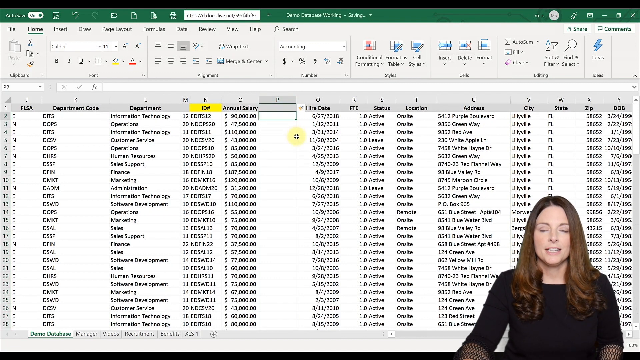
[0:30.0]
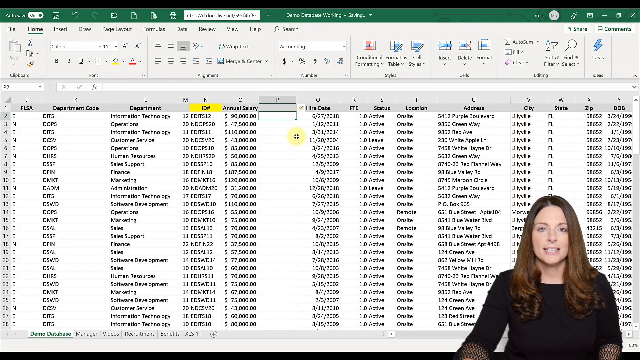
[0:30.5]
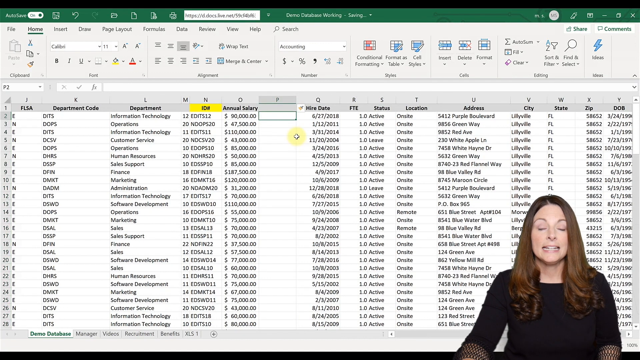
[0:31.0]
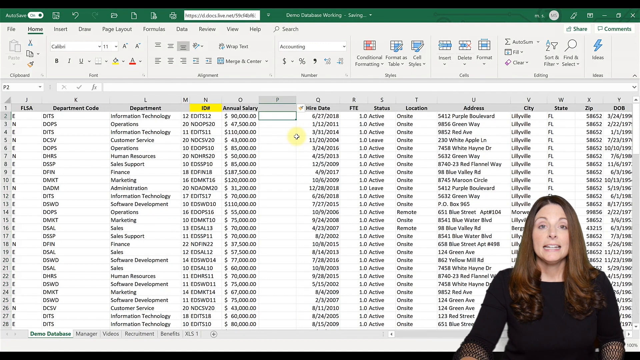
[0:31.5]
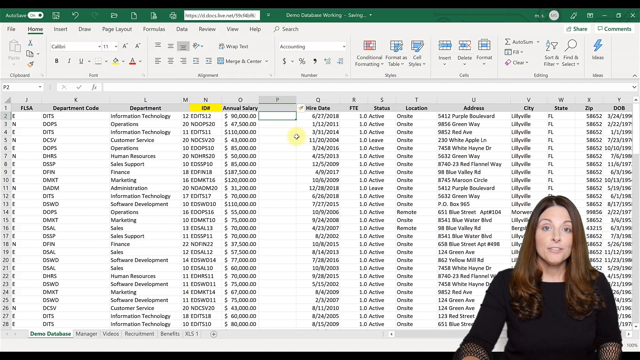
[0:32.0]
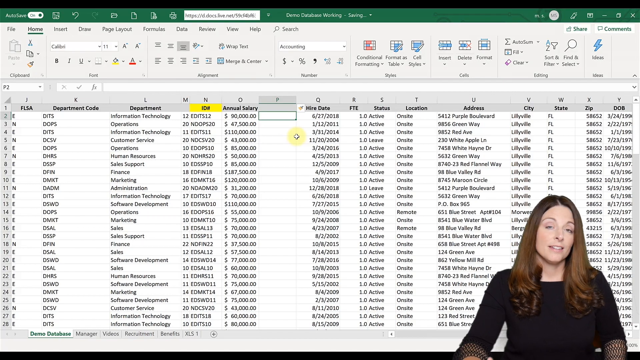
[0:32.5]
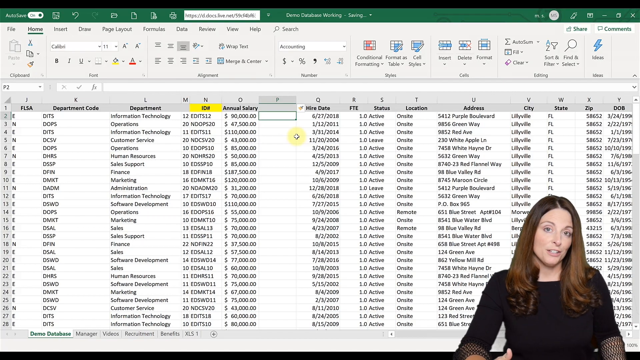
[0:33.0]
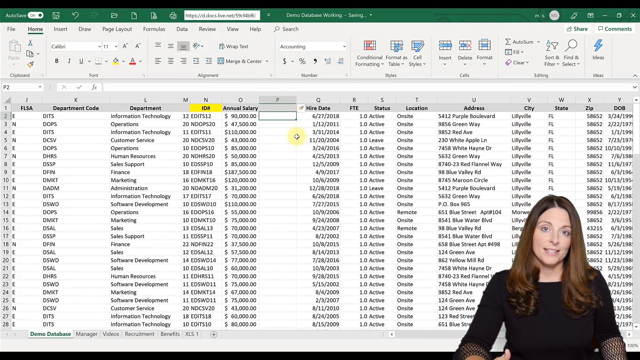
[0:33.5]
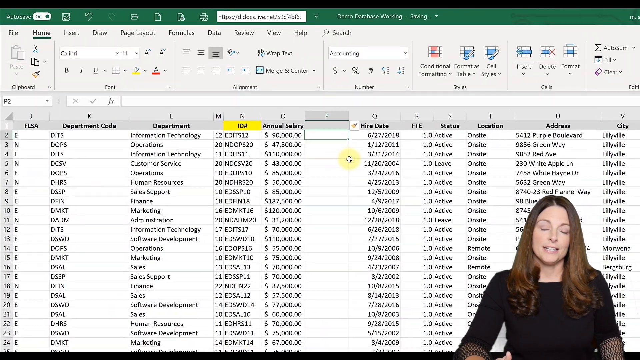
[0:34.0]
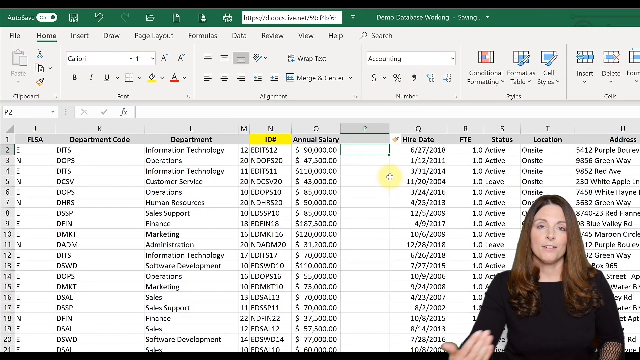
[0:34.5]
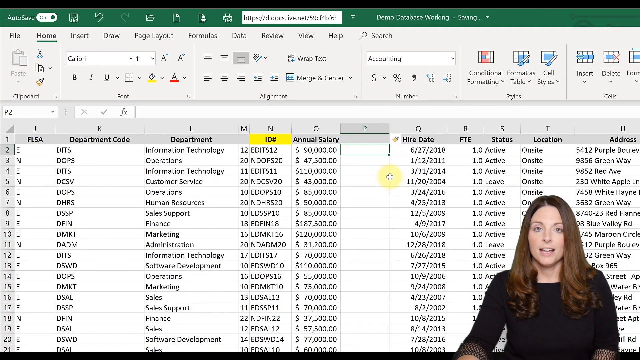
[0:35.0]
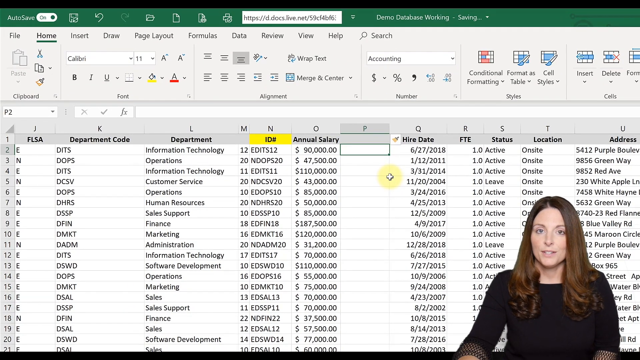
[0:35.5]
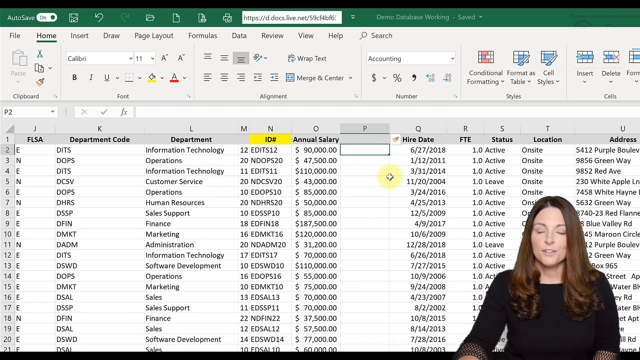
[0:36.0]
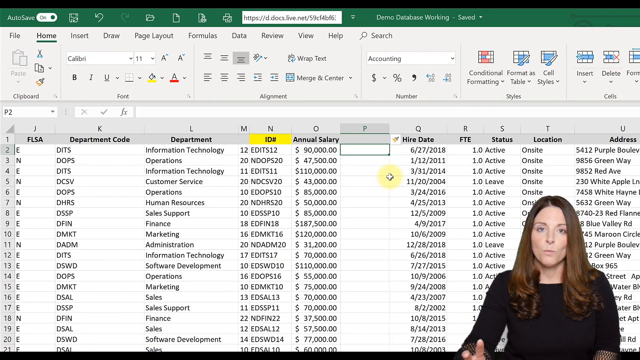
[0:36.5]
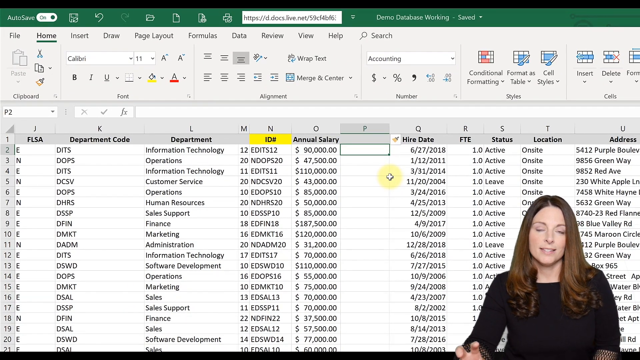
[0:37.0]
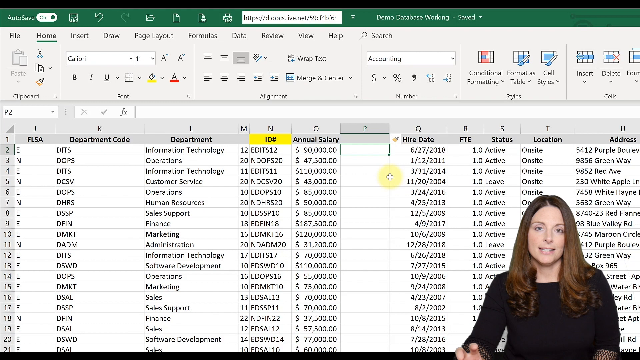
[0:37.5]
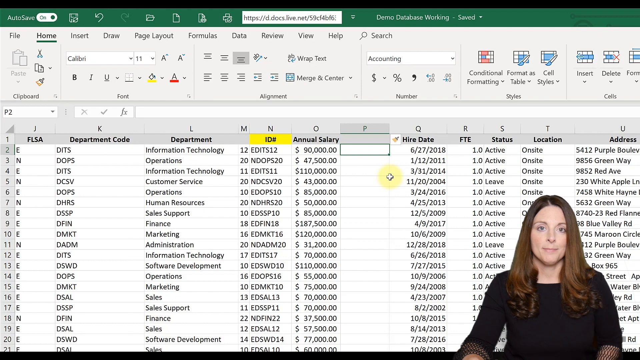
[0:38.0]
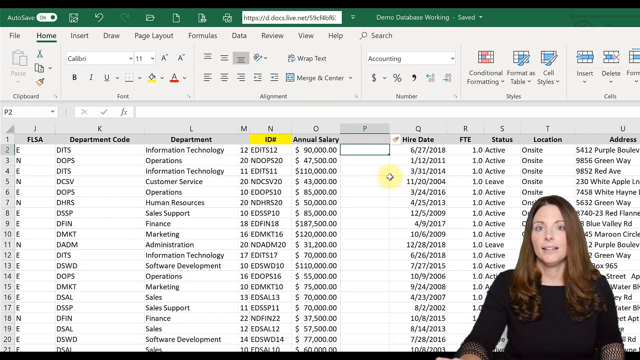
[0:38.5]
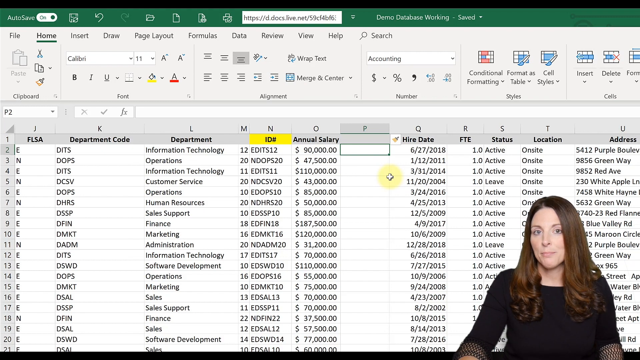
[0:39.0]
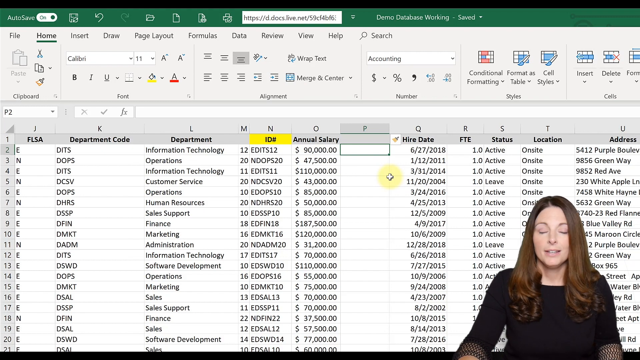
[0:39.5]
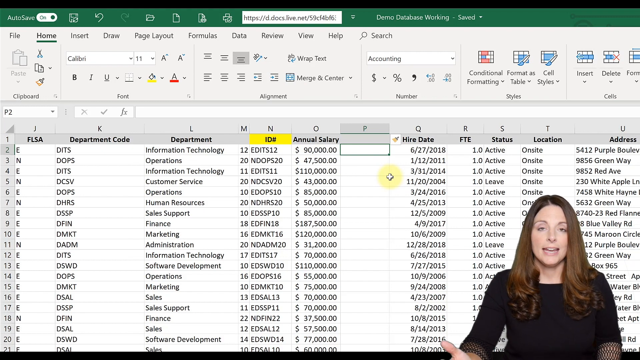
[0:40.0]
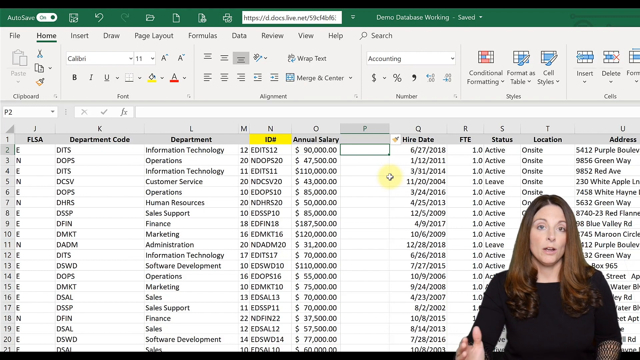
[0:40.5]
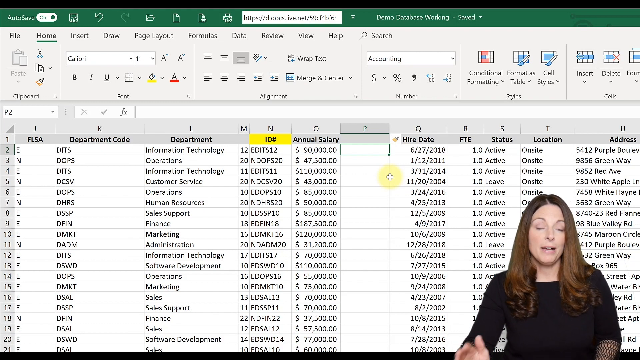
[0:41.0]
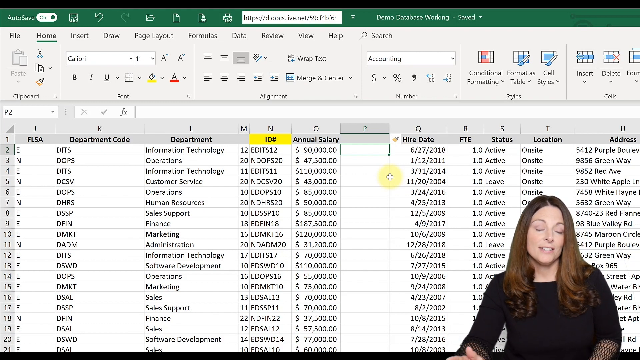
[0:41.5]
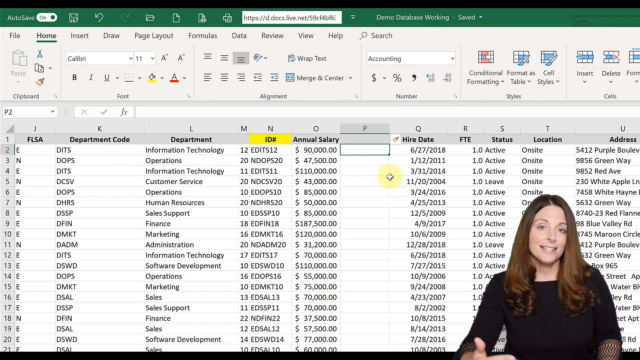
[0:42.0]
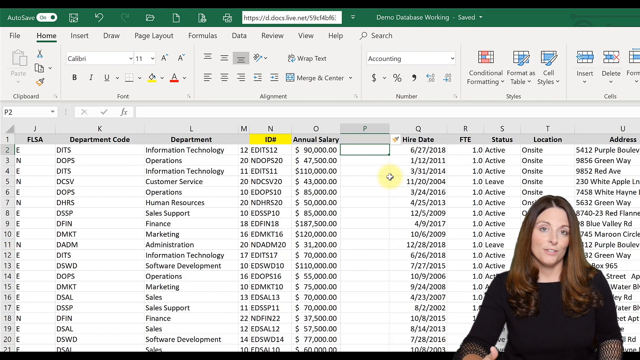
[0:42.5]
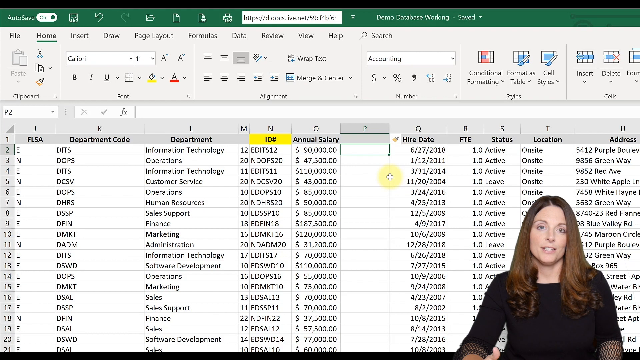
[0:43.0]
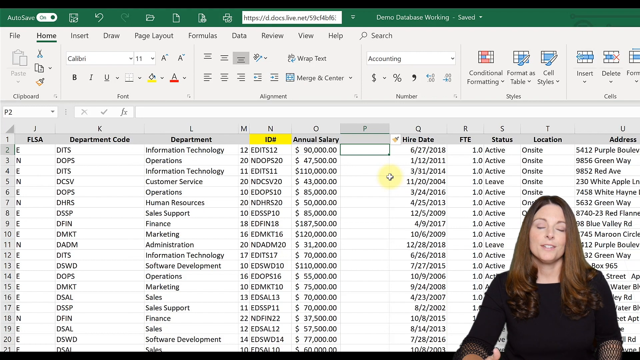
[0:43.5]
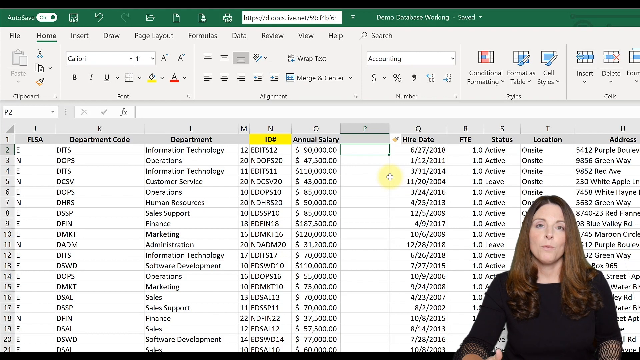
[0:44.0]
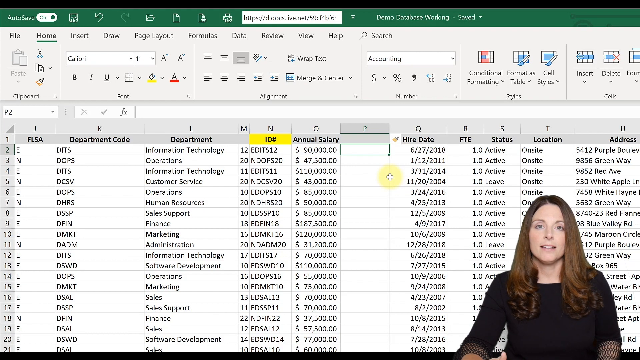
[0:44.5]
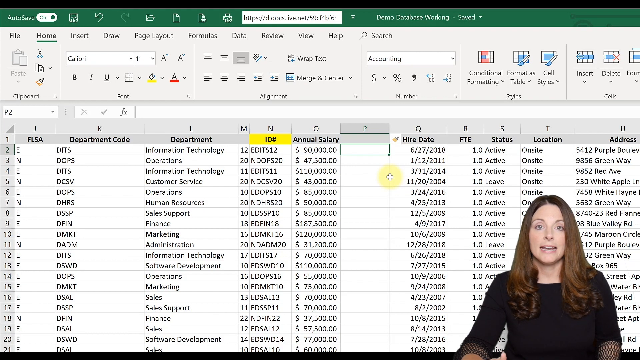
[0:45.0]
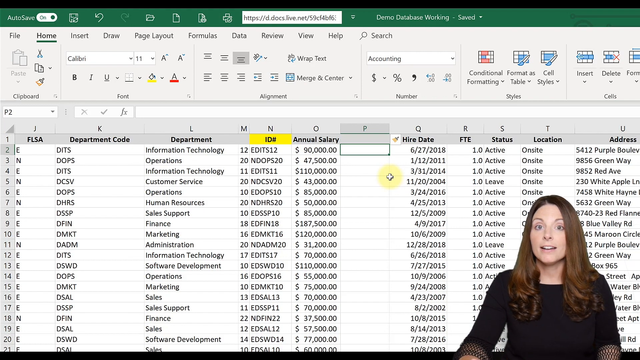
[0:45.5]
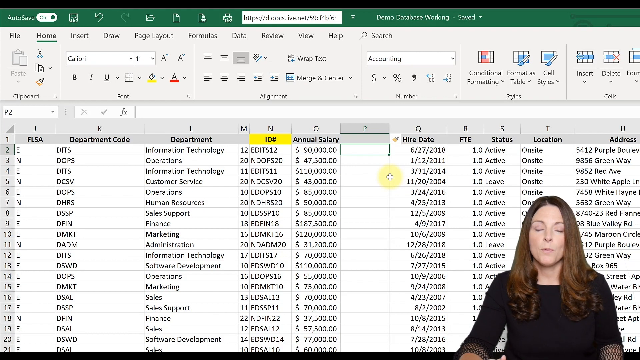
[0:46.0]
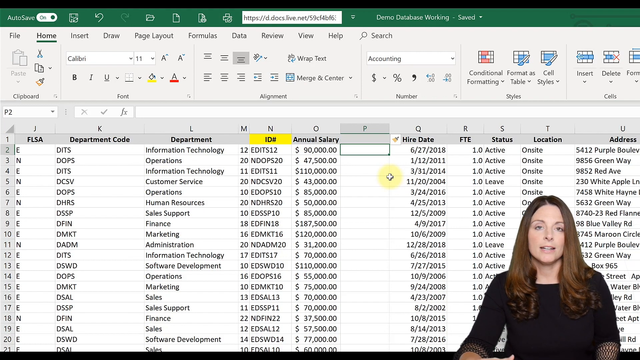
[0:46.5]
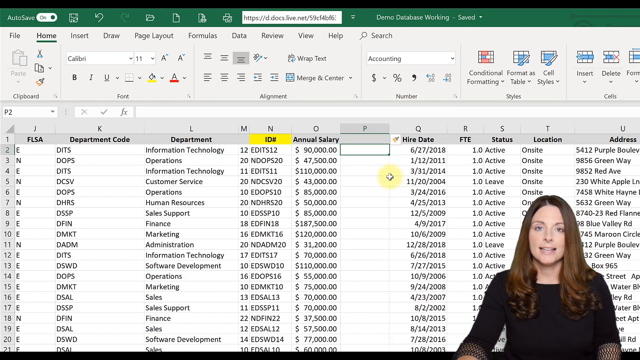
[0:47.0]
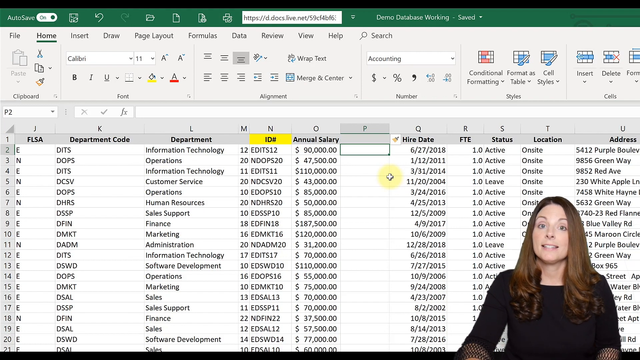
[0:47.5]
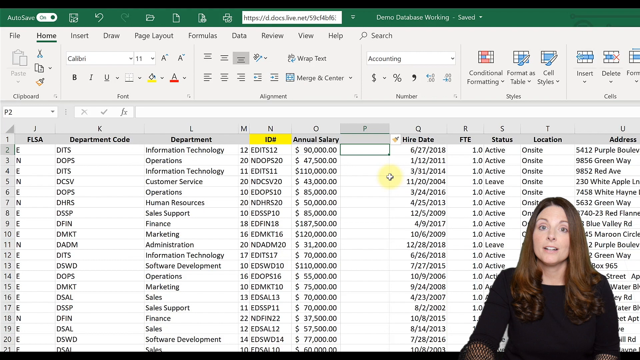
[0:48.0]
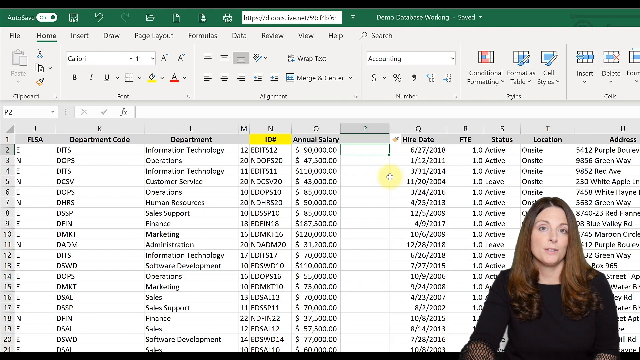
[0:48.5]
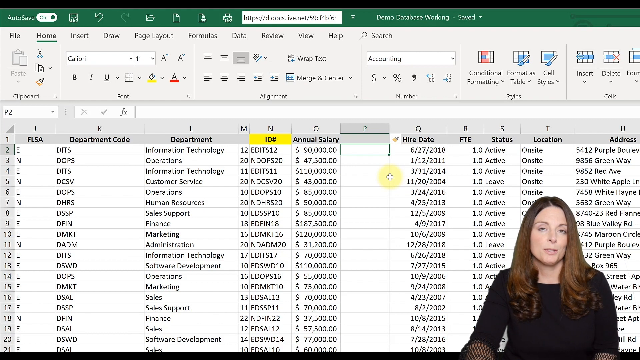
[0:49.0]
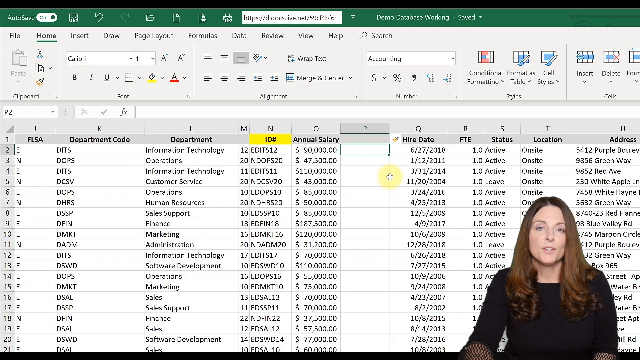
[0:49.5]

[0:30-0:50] An Excel spreadsheet fills the background, and in the right corner a Caucasian woman with brown hair and a black shirt is talking. A new column has been put in the middle of the sheet, with annual salary to its left and hire date to its right. The first box under row two is highlighted with a green box around it. The view then zooms in to show more of the screen, revealing the column headings: FLSA for column J, department code for column K, department for column L, numbers ranging from 10 to 20 in column M, "ID#" for column N, and annual salary for column O. Column P is the newly added column, column Q has hire date, and there are more columns to the right.